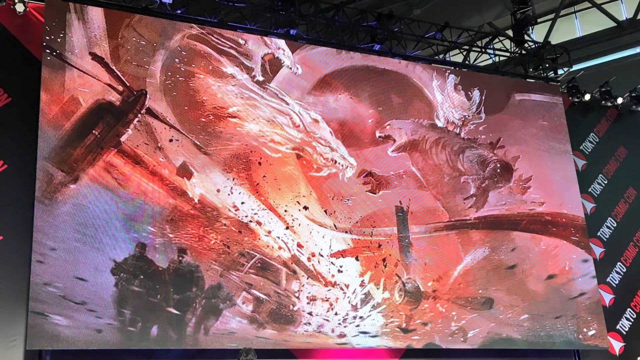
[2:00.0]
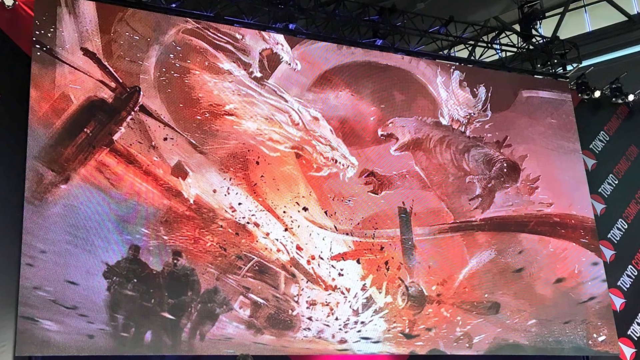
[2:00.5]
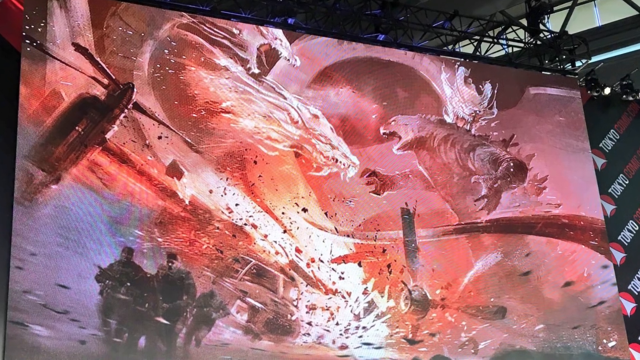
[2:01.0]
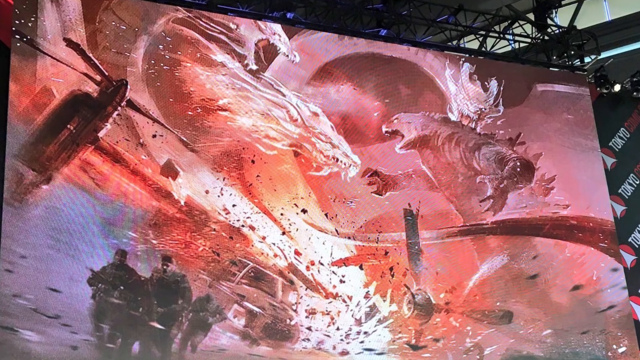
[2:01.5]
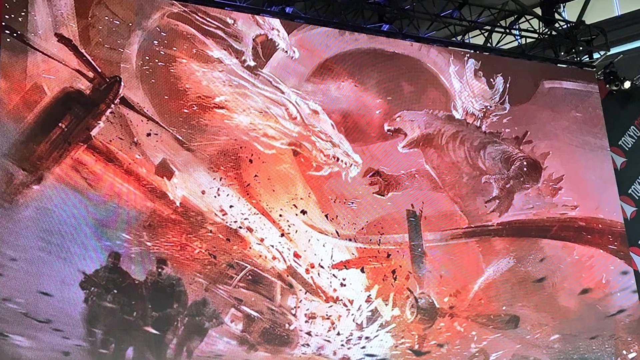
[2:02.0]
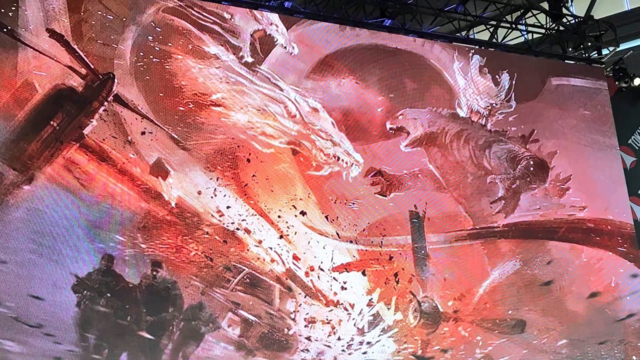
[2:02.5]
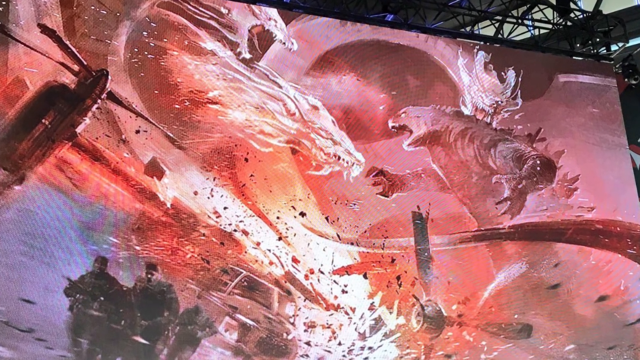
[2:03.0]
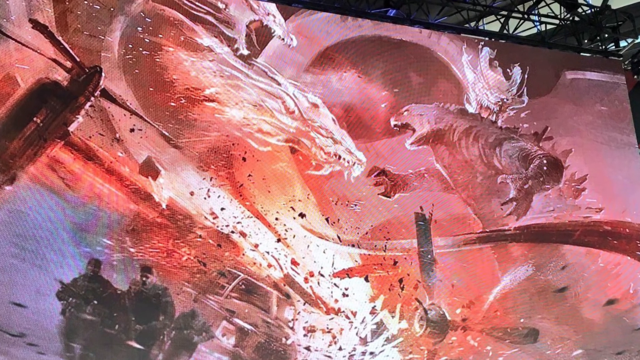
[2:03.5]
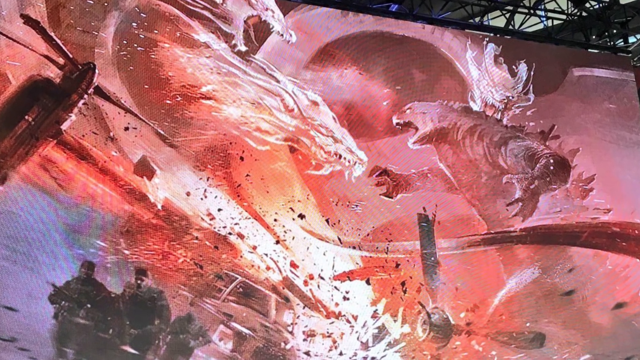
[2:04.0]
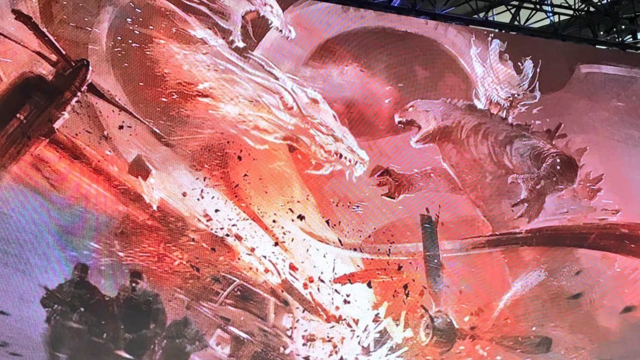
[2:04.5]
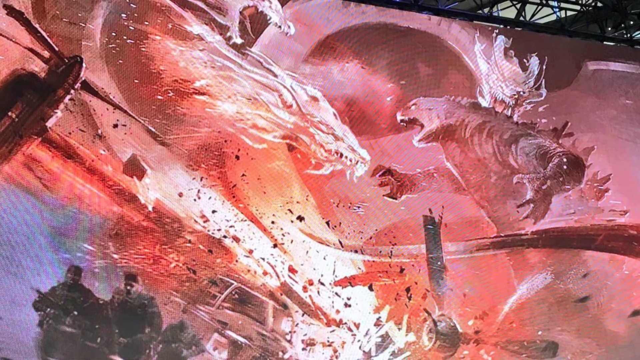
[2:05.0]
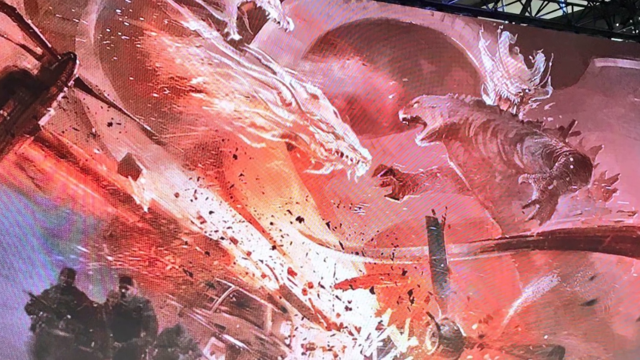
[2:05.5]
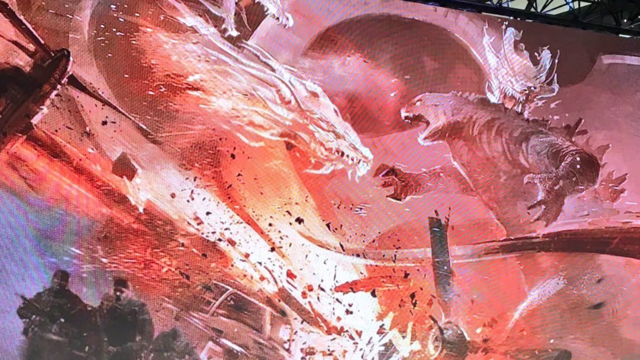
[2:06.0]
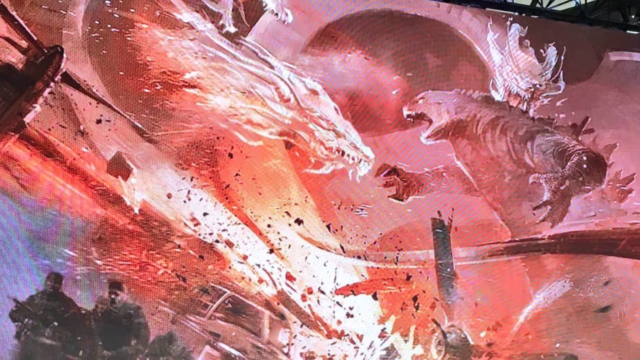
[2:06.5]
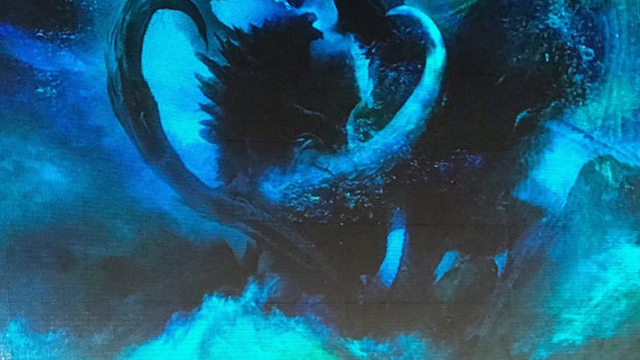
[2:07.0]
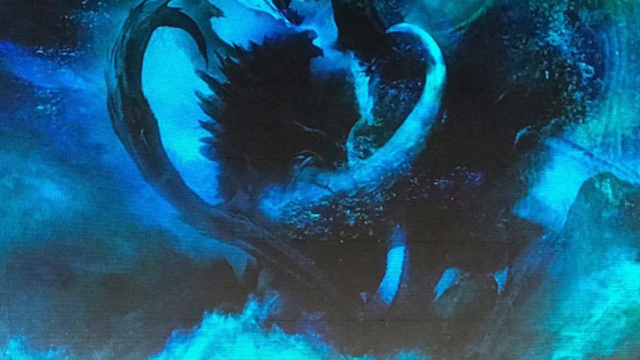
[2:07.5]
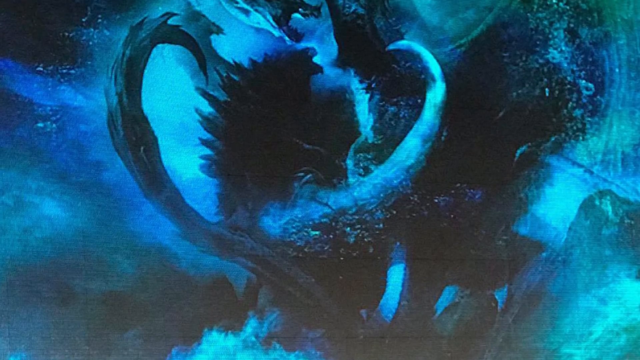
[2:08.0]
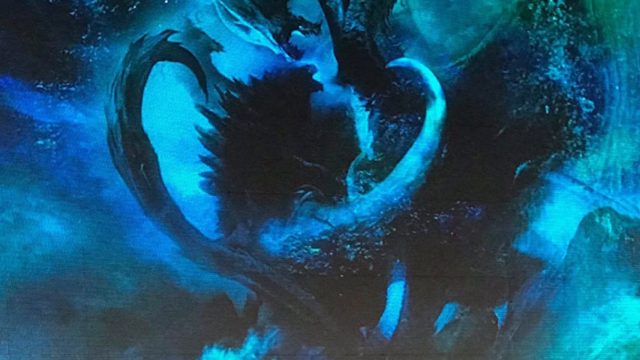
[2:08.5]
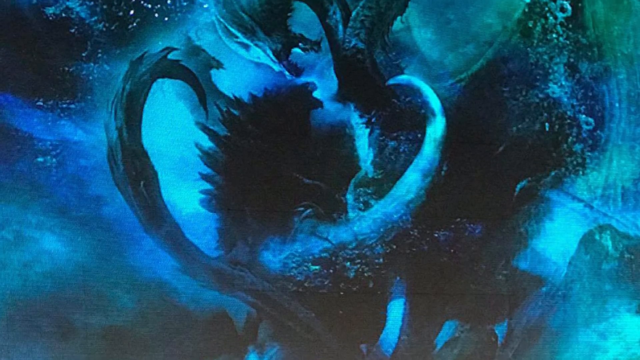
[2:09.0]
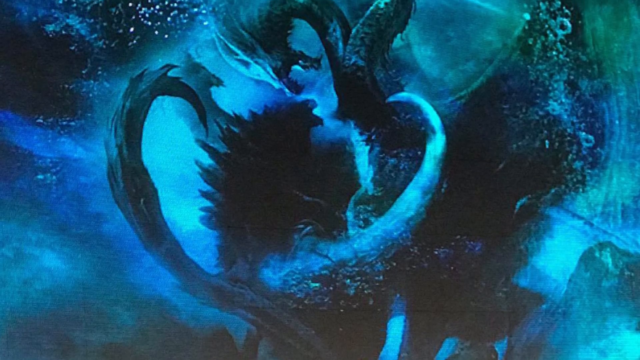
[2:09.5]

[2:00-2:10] A poster shows two monsters clashing. The monster on the right has three heads that look like dragon heads and is grayish in color. The overall background is red. The other monster looks like a dinosaur with ridges on its back that look like mountain ridges; it is Godzilla. There is havoc, with parts of broken planes, visible planes crashing, and vehicles rushing, while people at the bottom left seem to be running away from the clash. The two monsters are then shown fighting again, this time against a blue background that looks like it is underwater, with Godzilla, the dinosaur-like creature, on the left and a creature that looks like a three-headed dragon on the right.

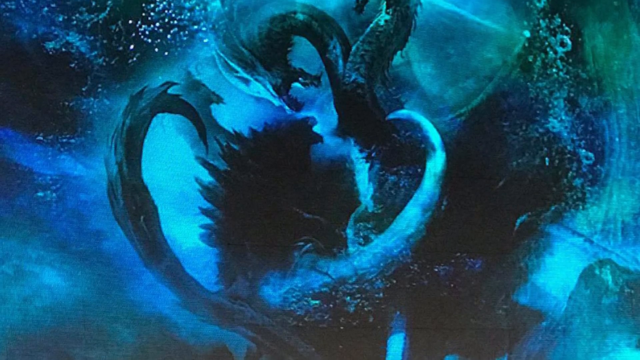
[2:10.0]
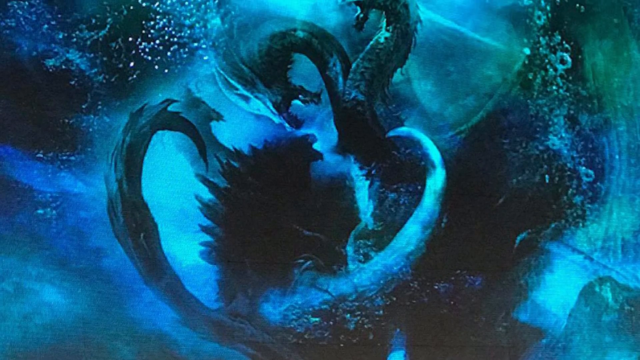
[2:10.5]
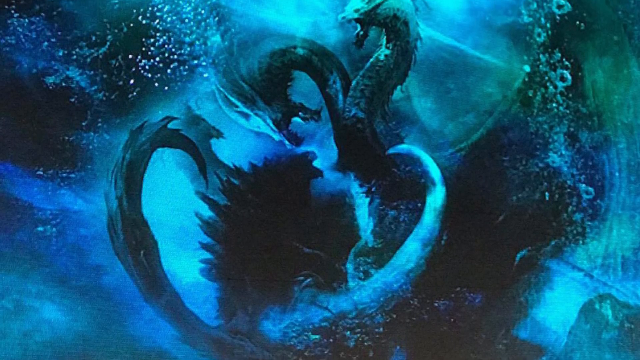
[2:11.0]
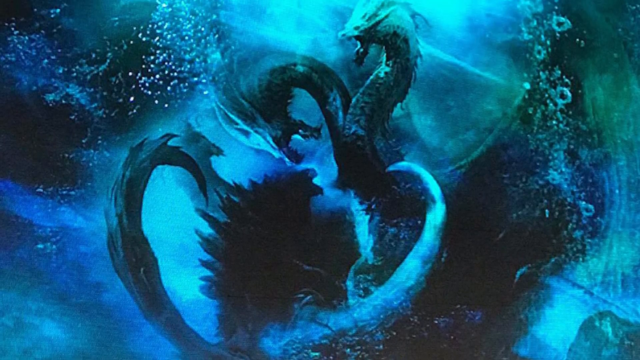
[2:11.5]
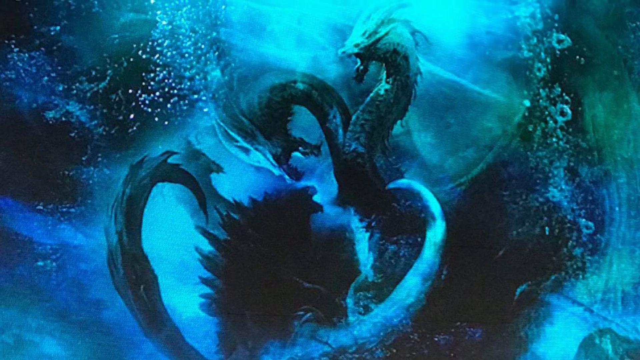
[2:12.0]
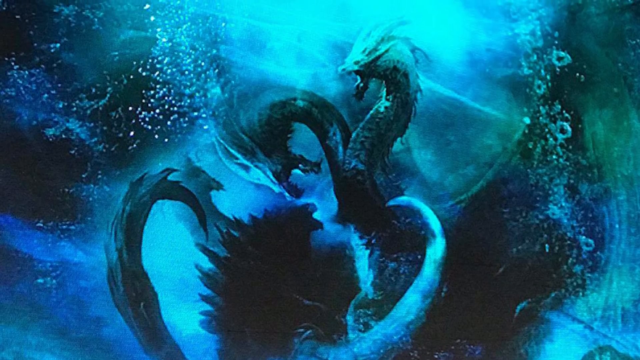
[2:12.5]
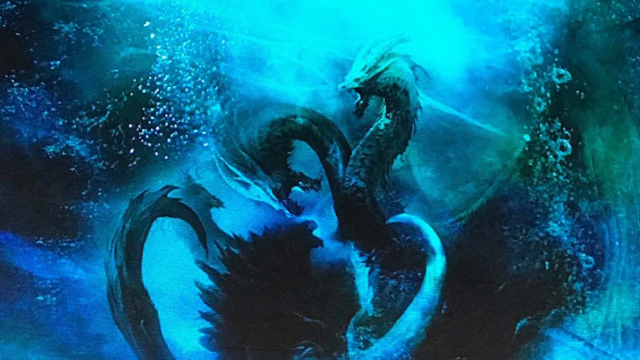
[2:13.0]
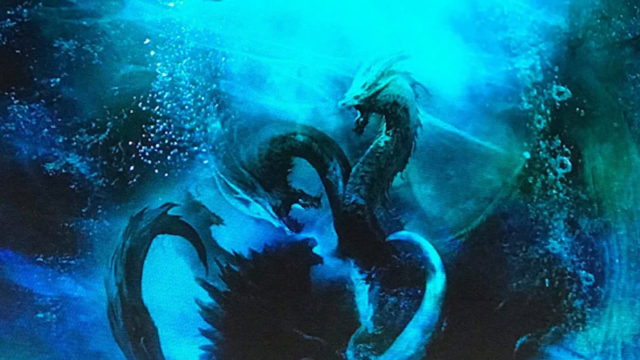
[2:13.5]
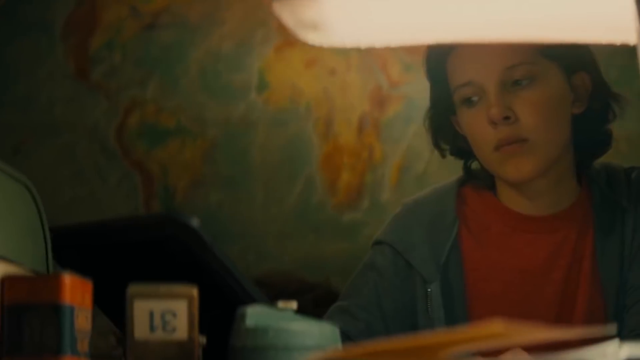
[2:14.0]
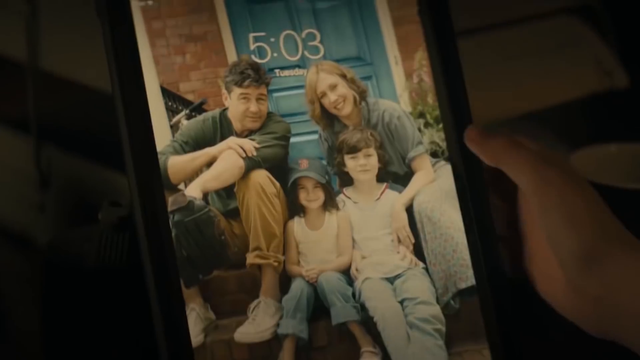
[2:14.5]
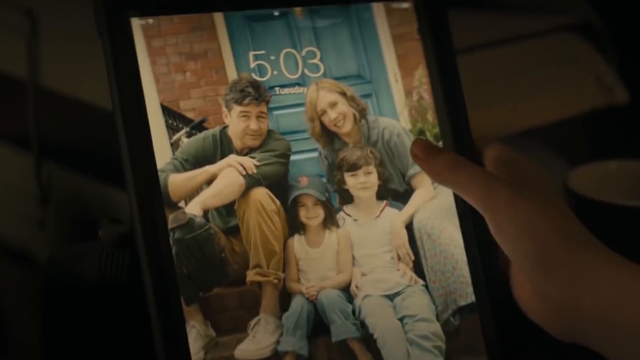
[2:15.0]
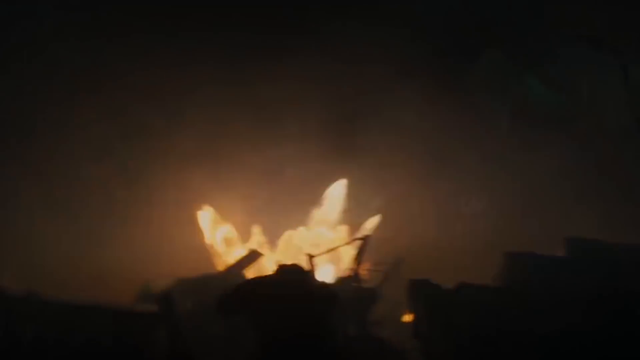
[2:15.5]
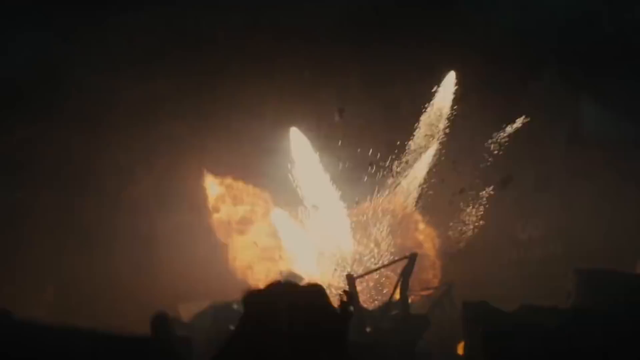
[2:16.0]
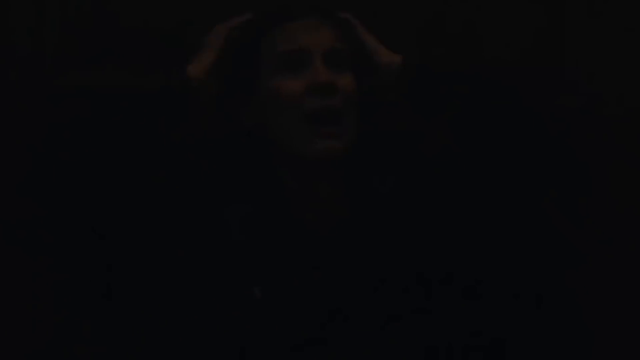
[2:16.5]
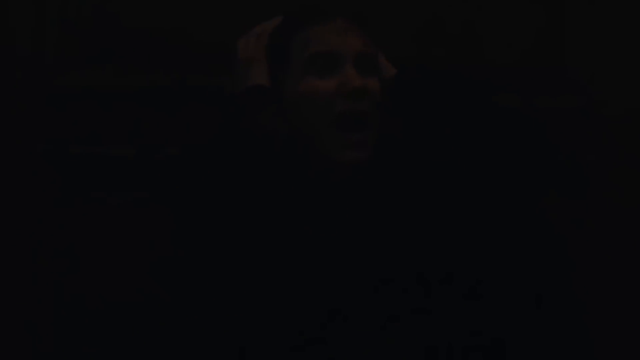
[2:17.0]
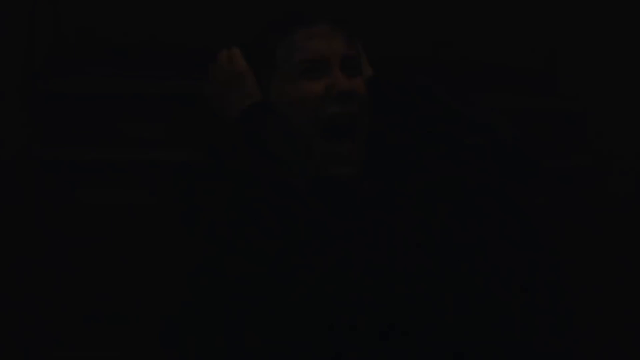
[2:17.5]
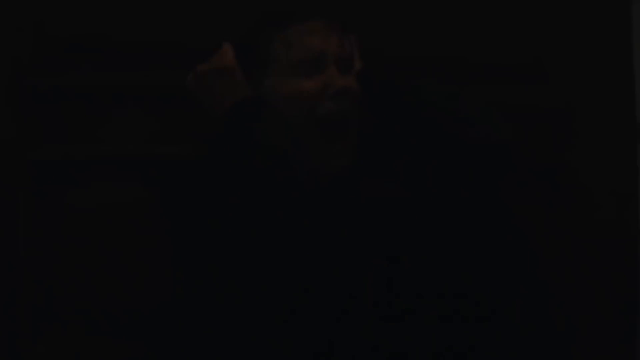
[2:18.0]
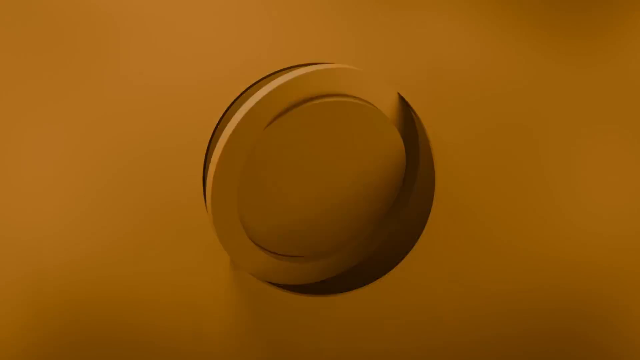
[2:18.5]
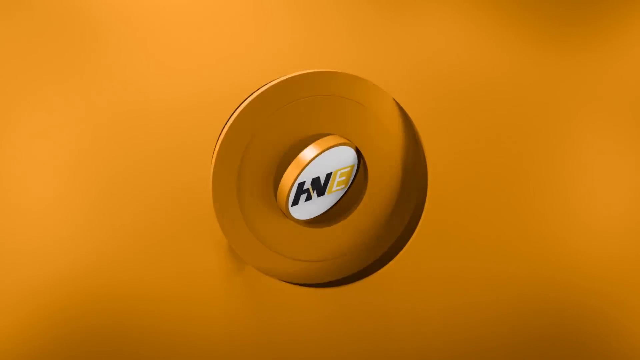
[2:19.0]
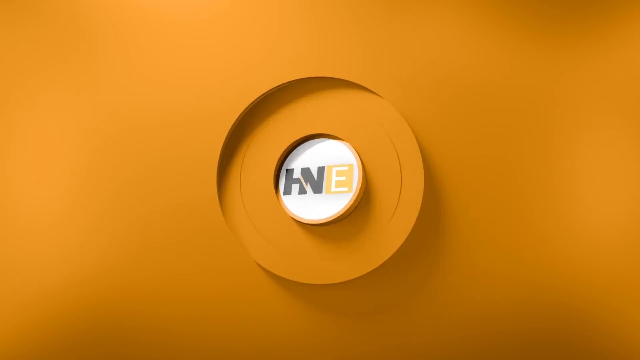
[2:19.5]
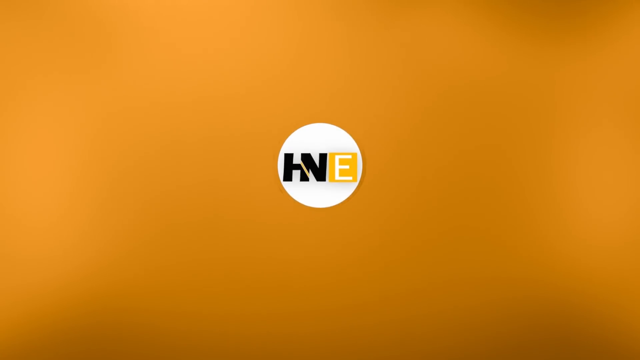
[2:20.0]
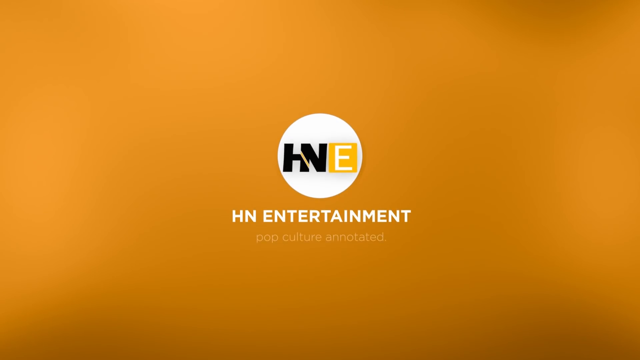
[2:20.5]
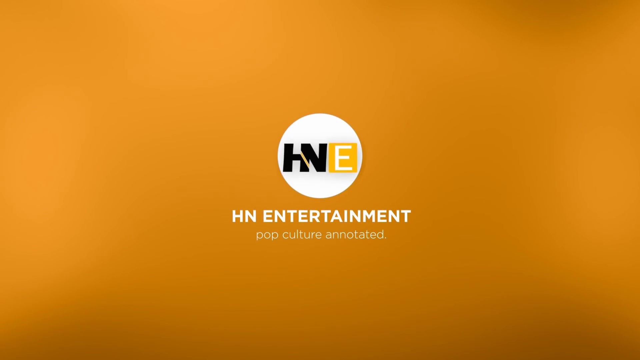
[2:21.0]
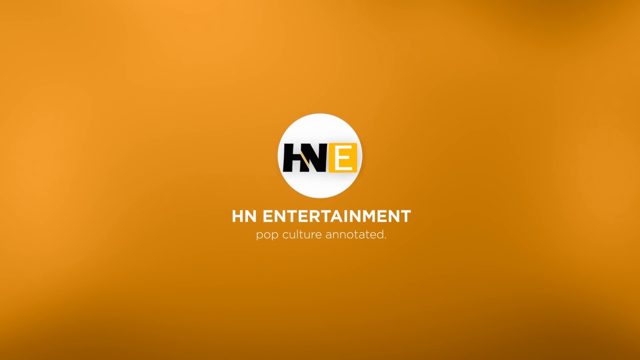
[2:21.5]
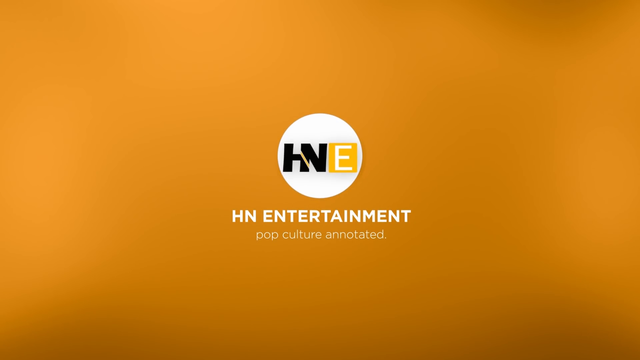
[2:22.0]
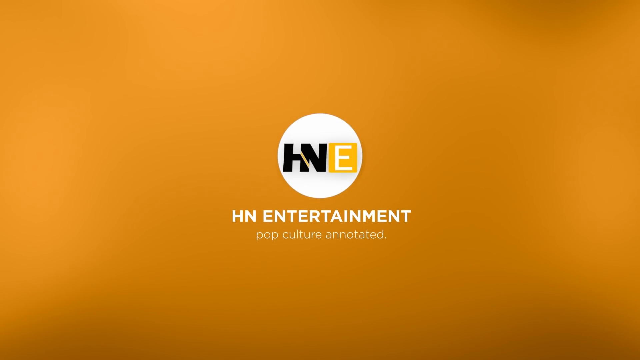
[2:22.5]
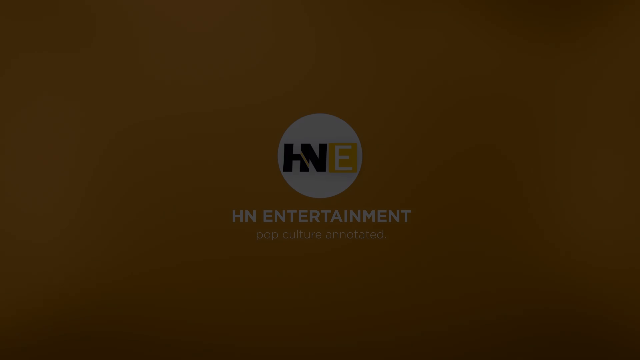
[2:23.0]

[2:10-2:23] A picture with a blue background shows two creatures fighting. The creature on the left looks like a dinosaur, with ridges on its back that look like mountain ridges. The other creature looks like a dragon with three visible heads. They look like they are fighting in water, with water splashing. The video then switches to a white boy with black hair wearing a blue hoodie or jersey and a red t-shirt; behind him is a map of the world, and he is sitting behind a table with a study lamp. A tablet shows four people, two adults and two kids. The adult male wears a green shirt and brown pants, and the adult female wears a gray shirt and white pants. The kid on the right looks like a boy with black hair, wearing a white and blue t-shirt and blue jeans. The other kid wears a blue cap, a white vest and blue pants and has black hair. The head of a white person is shown pointing at the tablet. The video then shows an explosion, followed by writing, and finally a yellow background with the text "HN Entertainment".